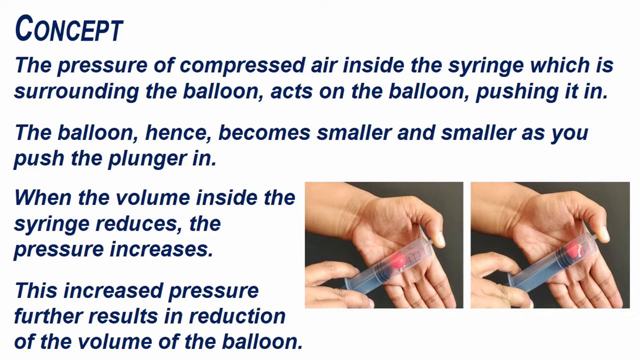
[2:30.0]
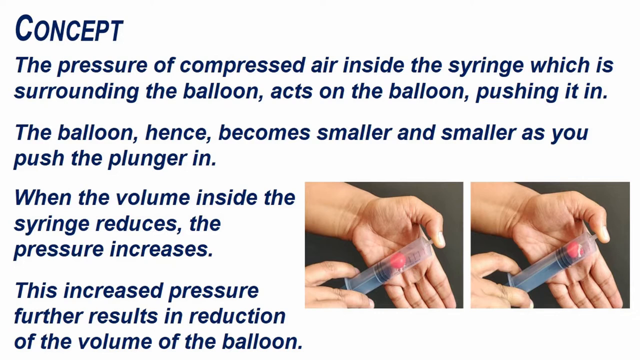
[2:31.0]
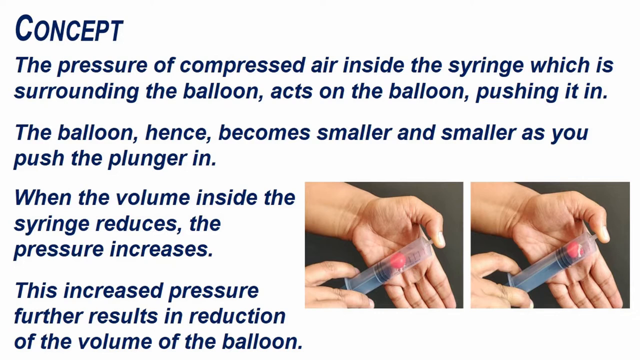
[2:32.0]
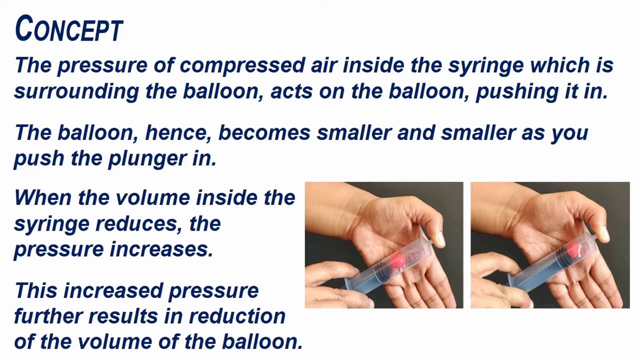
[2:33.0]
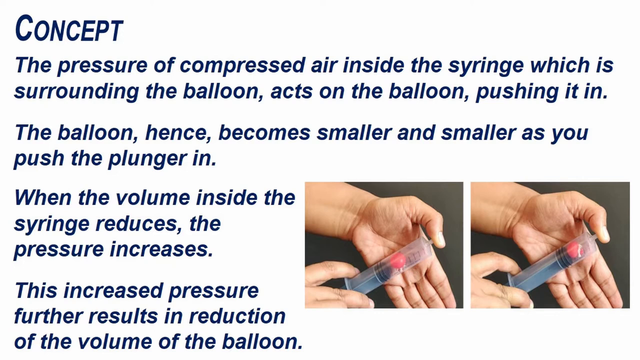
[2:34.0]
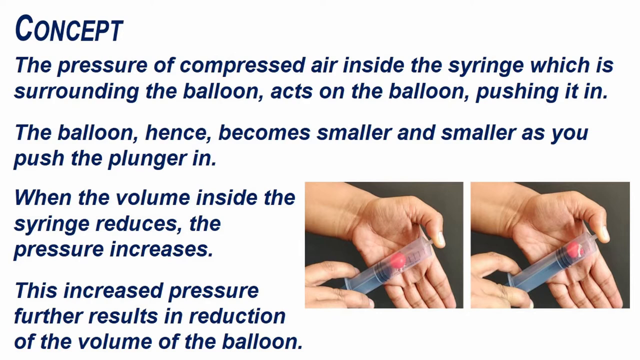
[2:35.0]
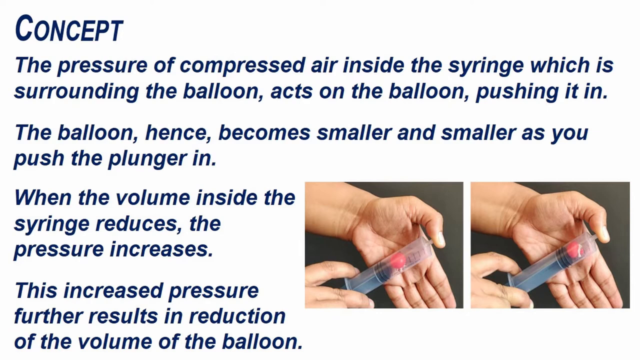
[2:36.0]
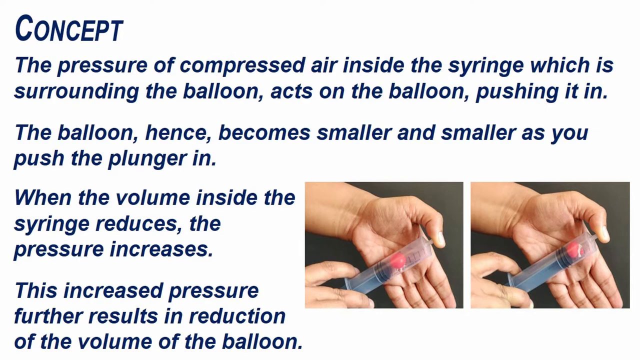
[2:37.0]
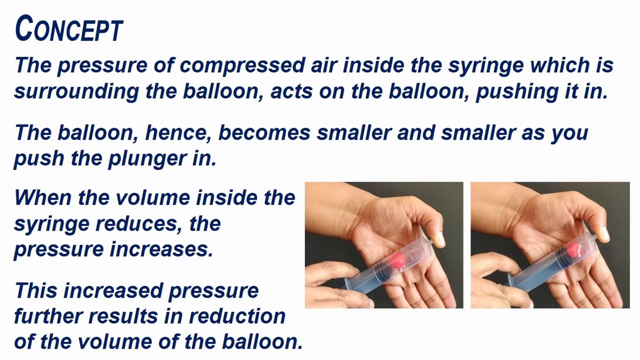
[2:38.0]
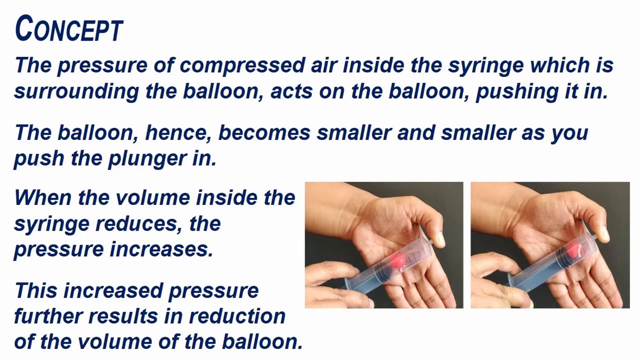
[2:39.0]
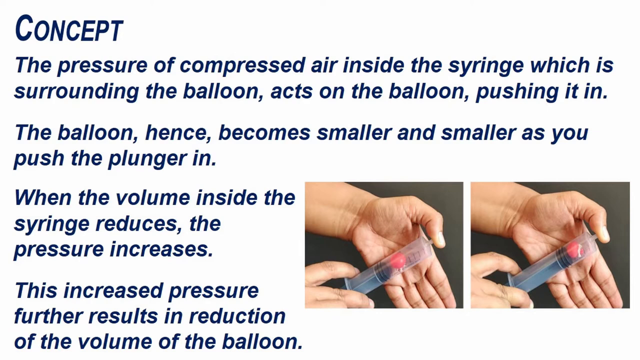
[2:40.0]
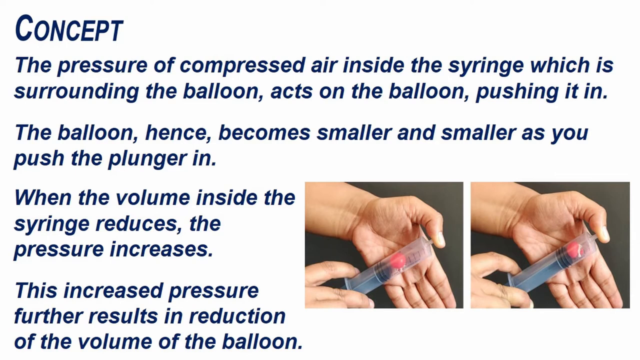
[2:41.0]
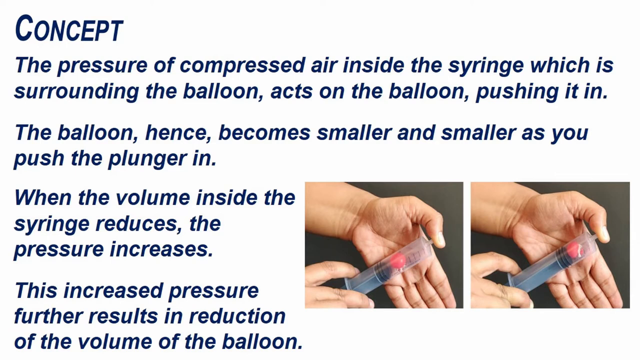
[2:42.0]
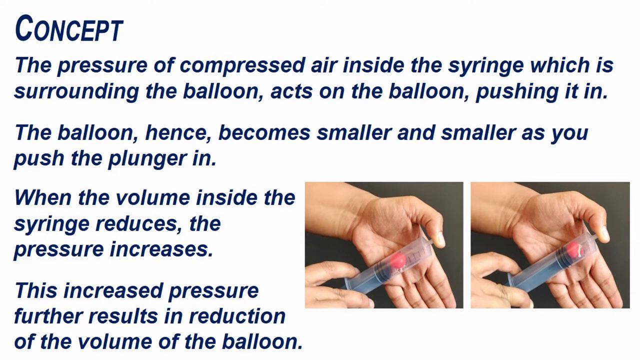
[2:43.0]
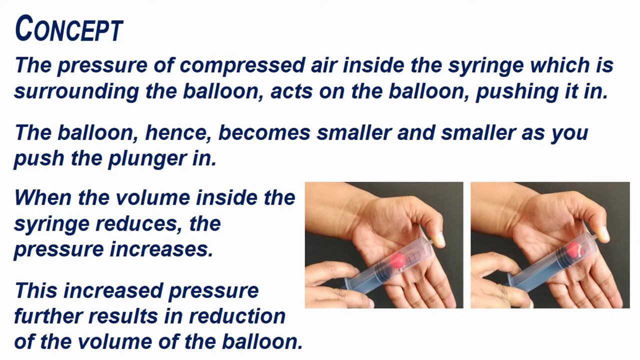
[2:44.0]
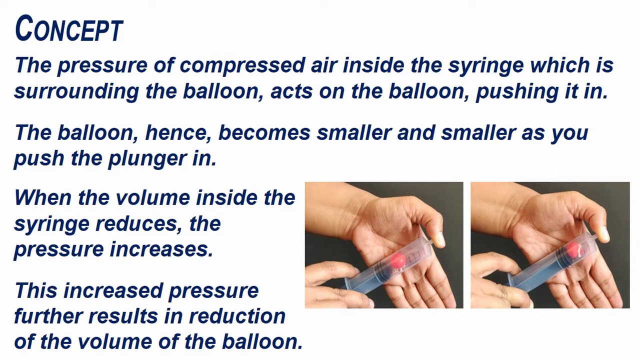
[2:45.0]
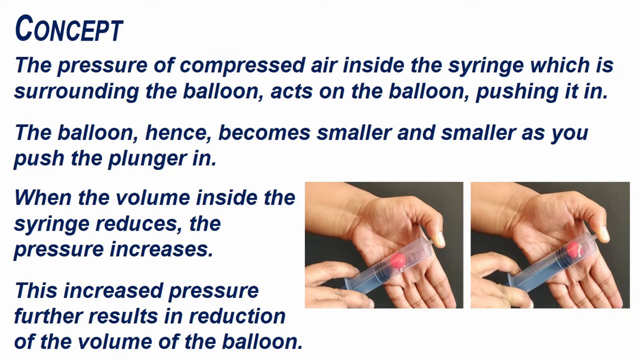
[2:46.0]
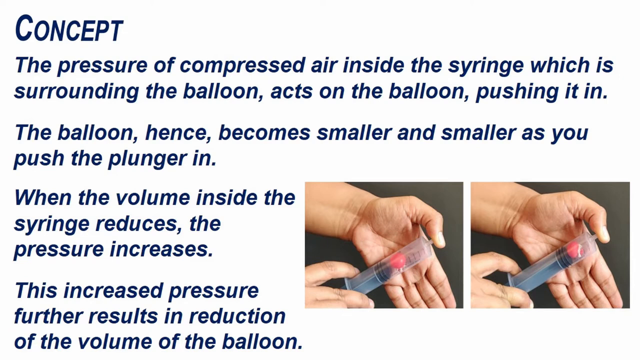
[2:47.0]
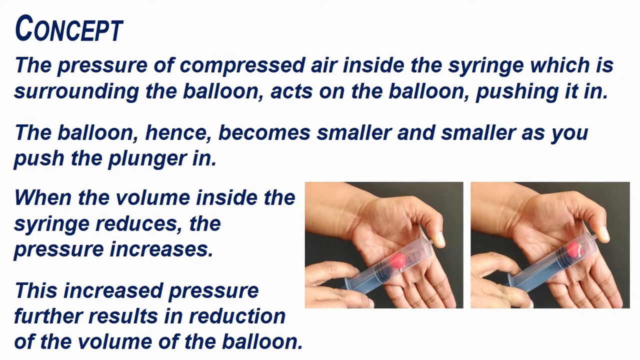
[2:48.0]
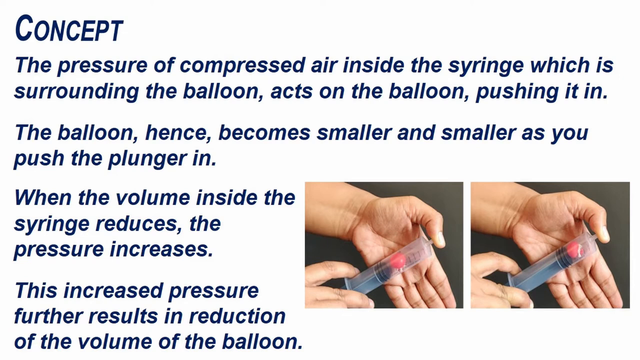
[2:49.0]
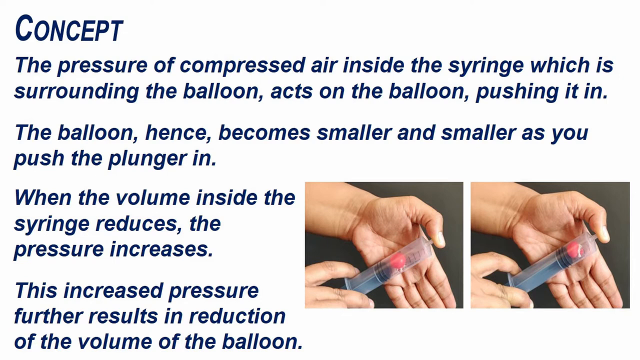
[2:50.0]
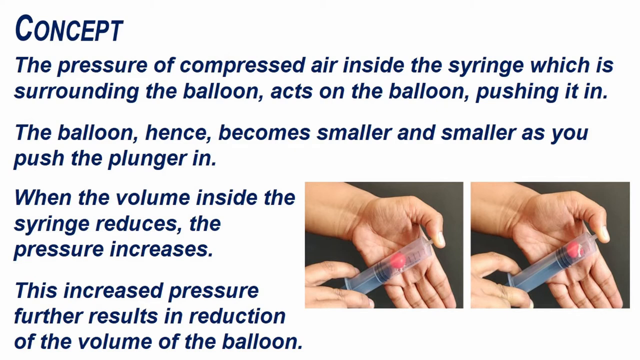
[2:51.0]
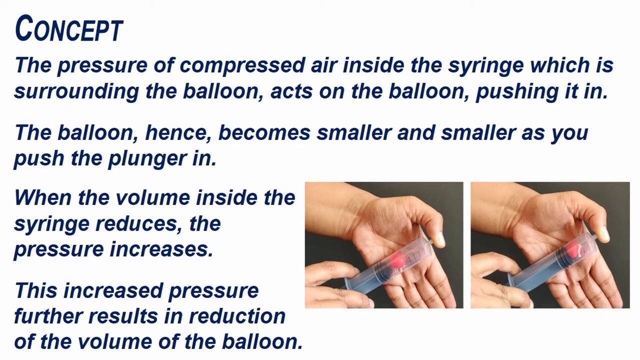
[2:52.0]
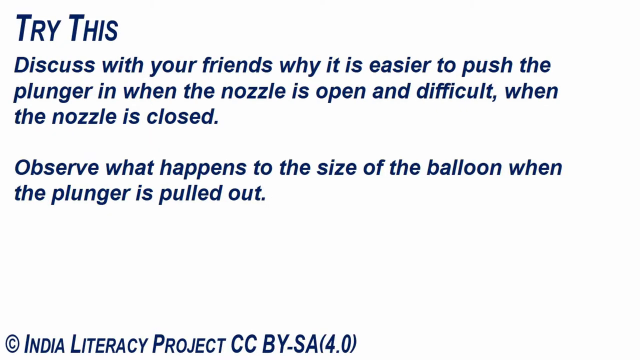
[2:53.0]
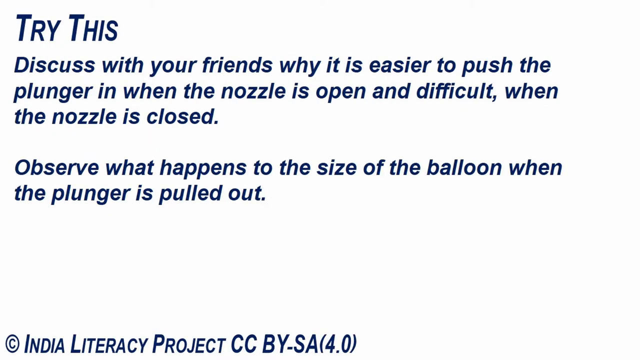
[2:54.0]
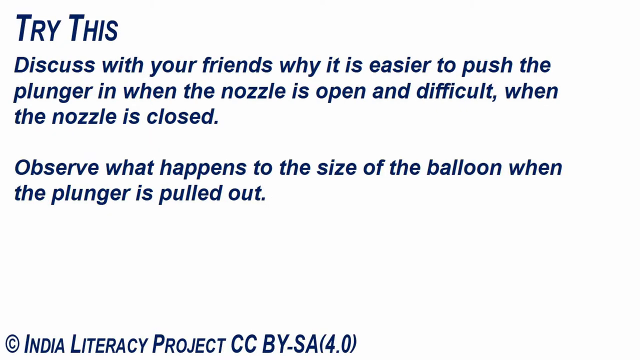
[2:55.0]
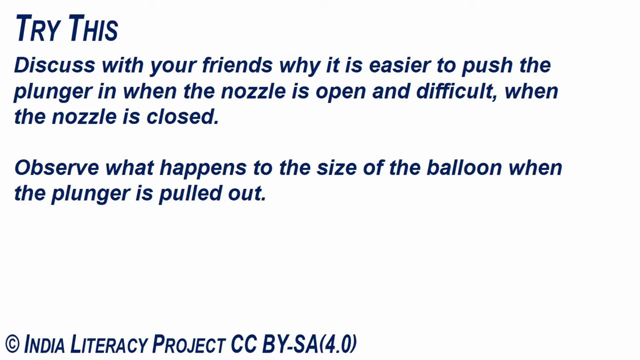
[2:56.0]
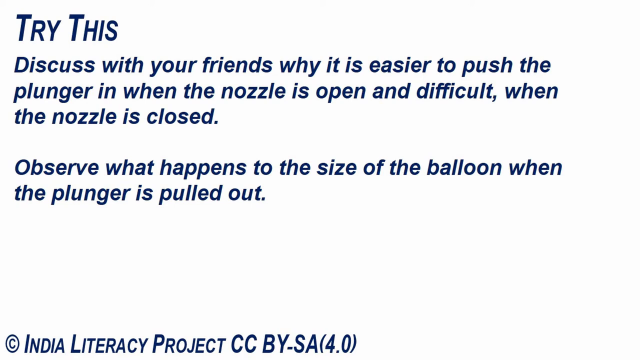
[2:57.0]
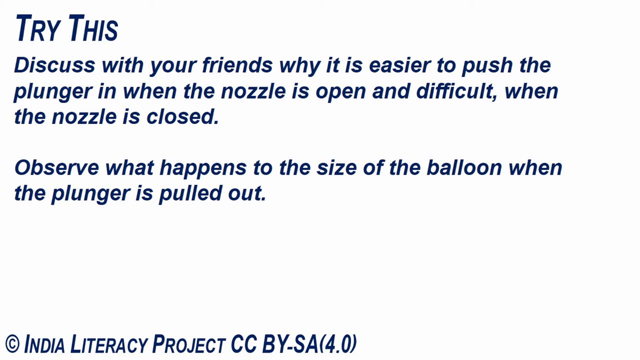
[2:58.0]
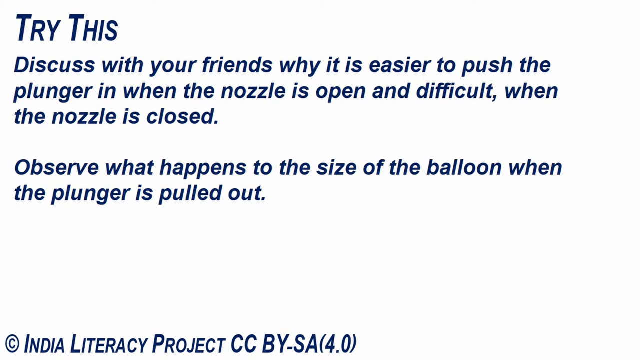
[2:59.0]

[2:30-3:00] The items needed are shown: a clear 20 ml syringe, a red balloon, and a white thread. The person doing the experiment holds the red balloon, showing that it is tied with the white thread and inflated a little. The person takes out the syringe plunger, inserts the red balloon, and pushes the plunger into the syringe, making the balloon go up while the syringe's nozzle is closed. As it is pushed up, the balloon grows smaller. At some point the plunger goes down by itself, leaving the balloon in the middle of the syringe. Boyle's law is then explained as responsible for the experiment, and viewers are encouraged to try this at home.